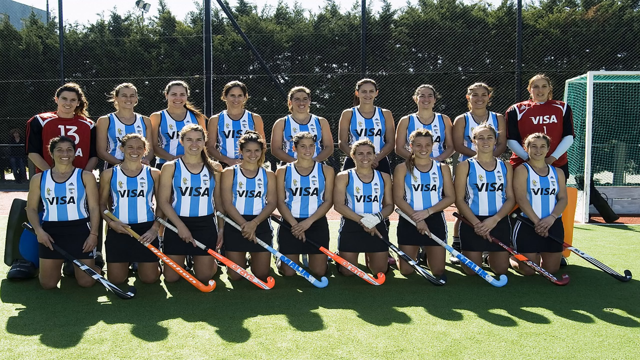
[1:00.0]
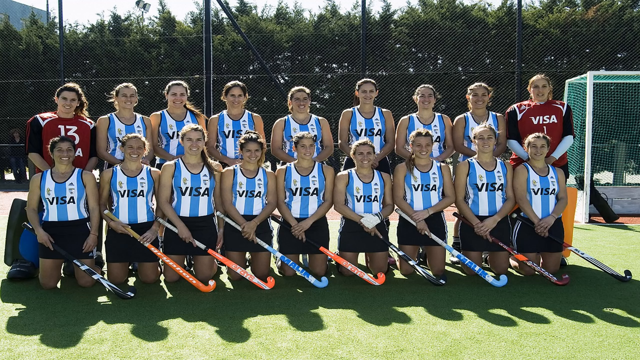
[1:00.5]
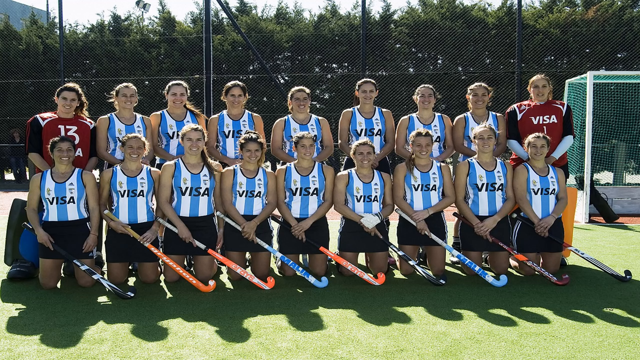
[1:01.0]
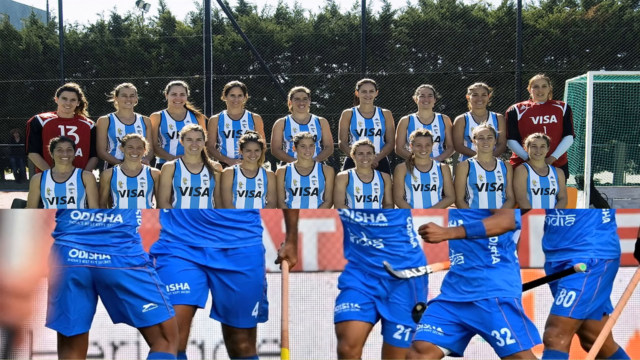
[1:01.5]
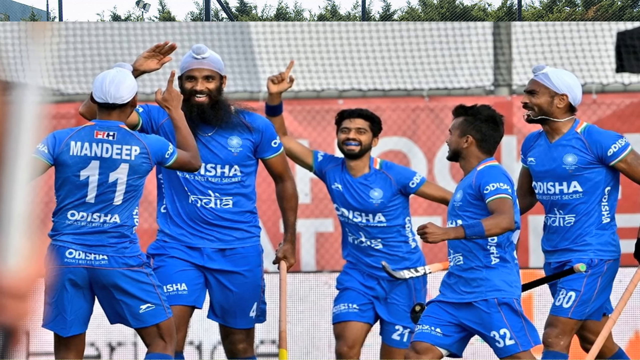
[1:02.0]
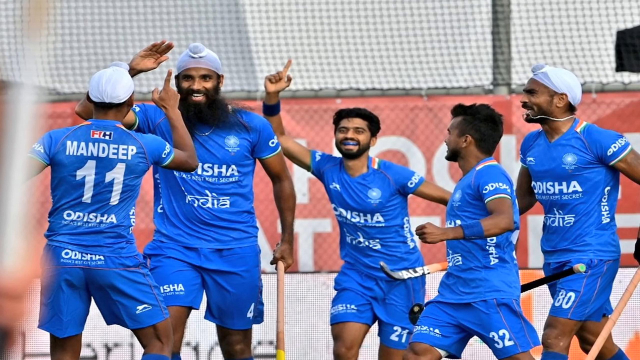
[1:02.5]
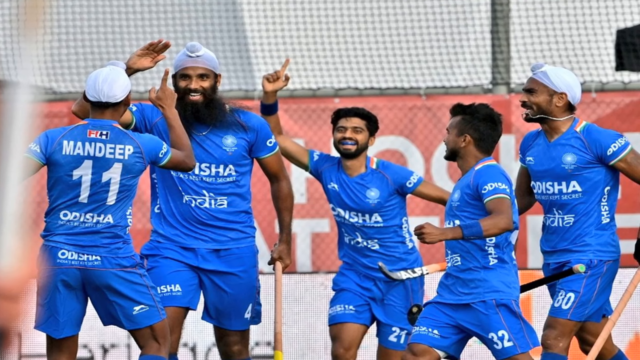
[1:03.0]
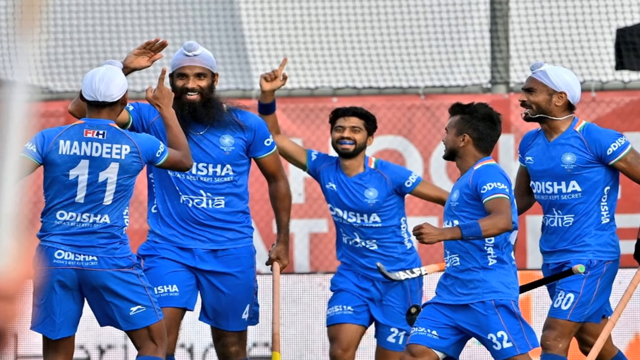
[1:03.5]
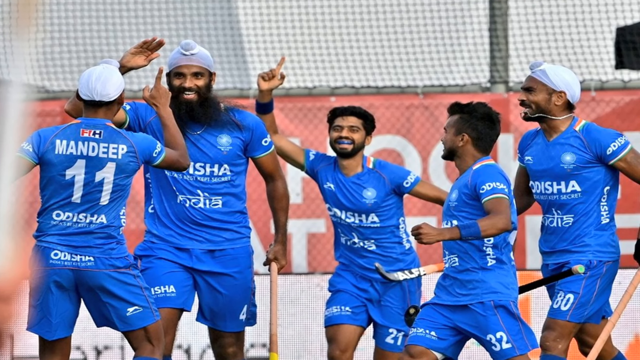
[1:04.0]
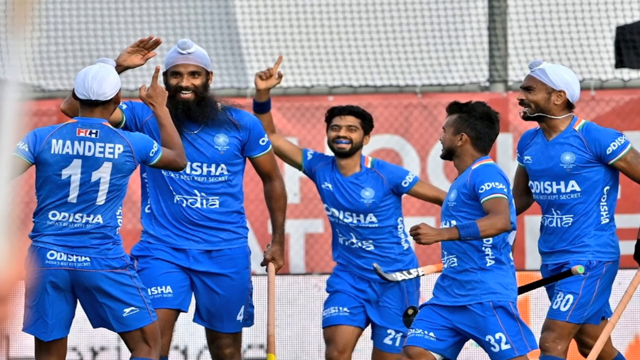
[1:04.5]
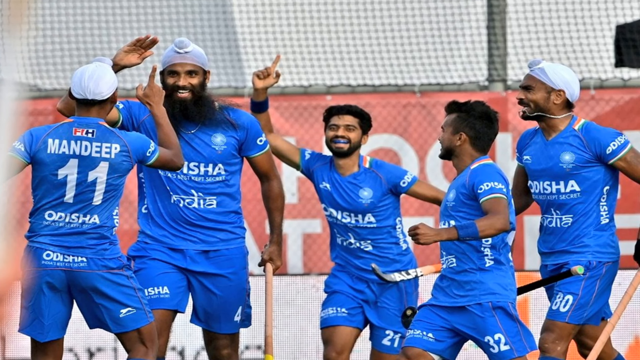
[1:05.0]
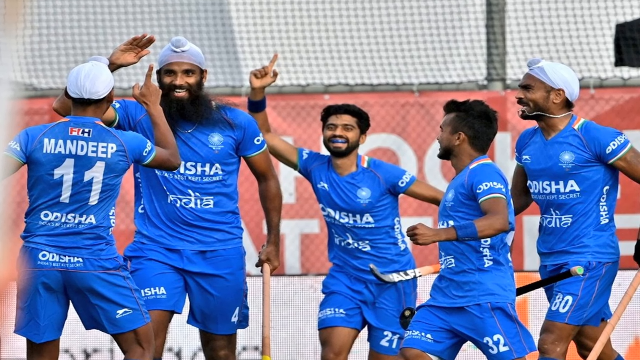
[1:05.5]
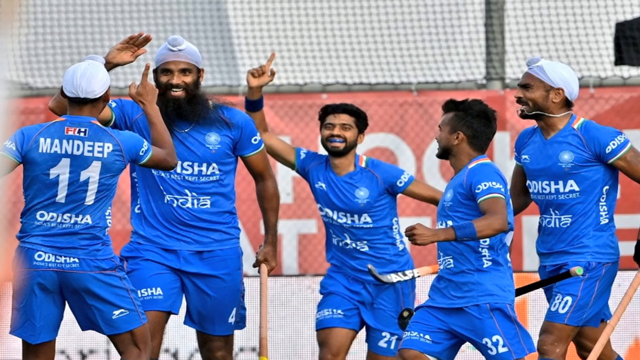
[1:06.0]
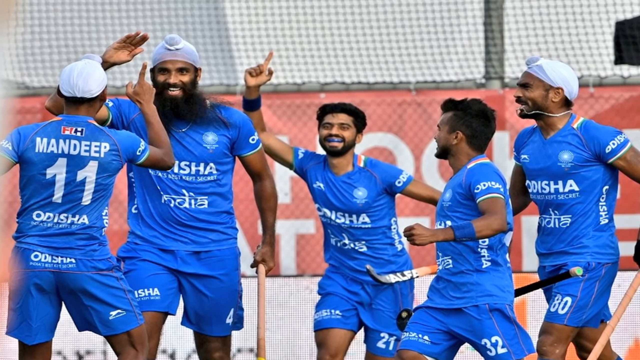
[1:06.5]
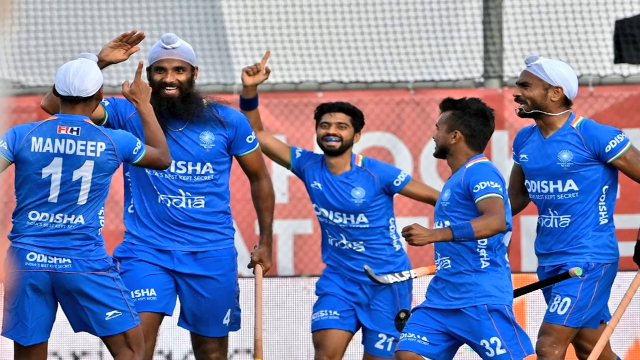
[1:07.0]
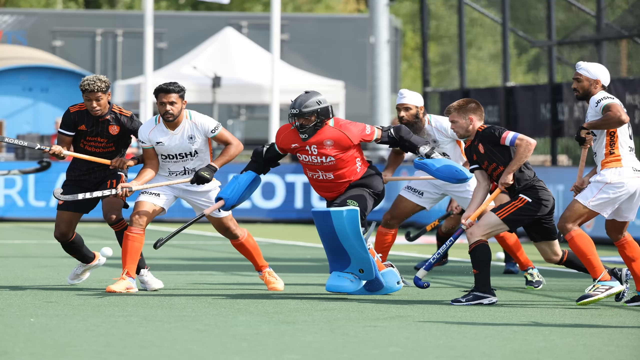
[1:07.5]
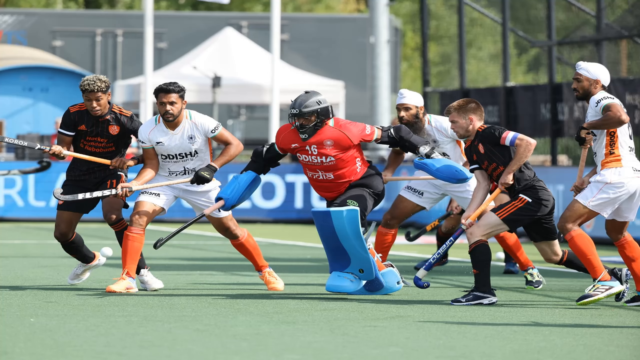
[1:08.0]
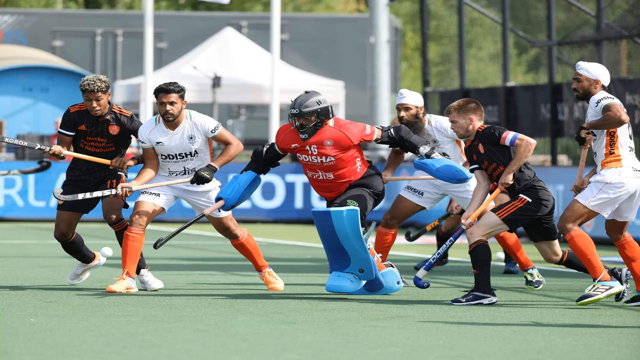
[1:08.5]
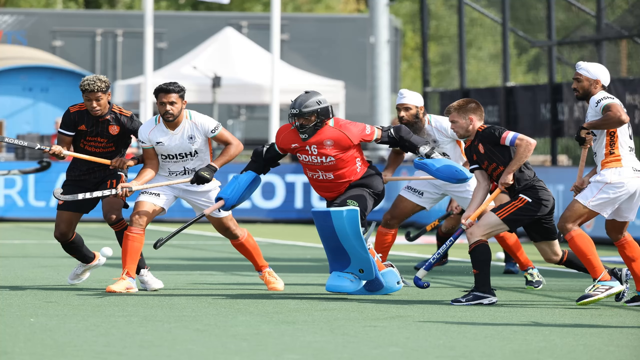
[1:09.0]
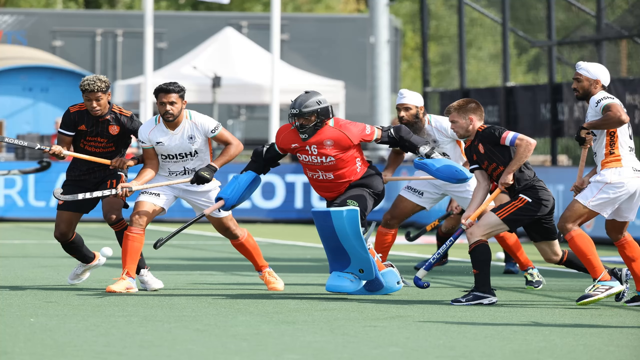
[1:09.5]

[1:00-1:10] Girls pose for a team picture in two rows, all holding their hockey sticks in front of them, facing to the right. The front row kneels, wearing black shorts and blue and white striped tank tops that say "Visa". The second row wears the same tank tops and stands; at each end of that row a girl wears a very bulky burgundy and black goalie outfit with padded shoulders. To the right of the girls is part of what looks like the goal. The scene then flashes to five guys in blue jerseys with white turban-looking things on their heads; they look Middle Eastern. They are some kind of sports team, also playing some kind of field hockey game.